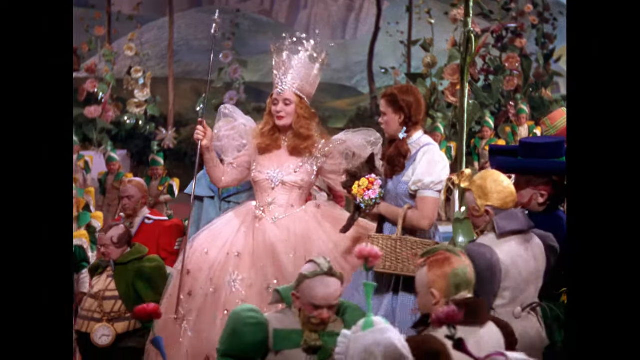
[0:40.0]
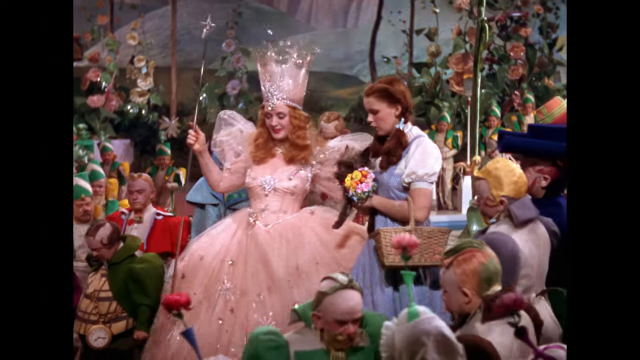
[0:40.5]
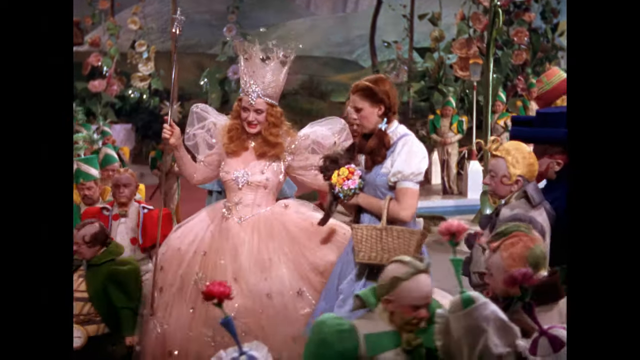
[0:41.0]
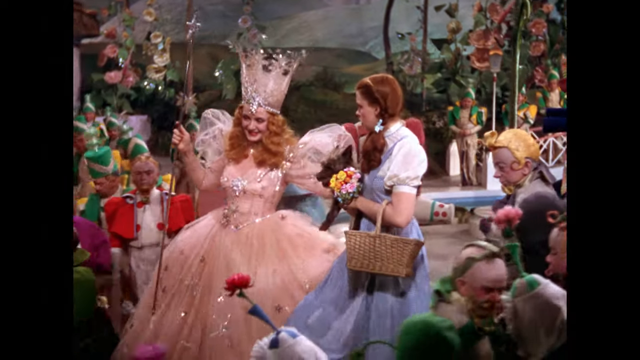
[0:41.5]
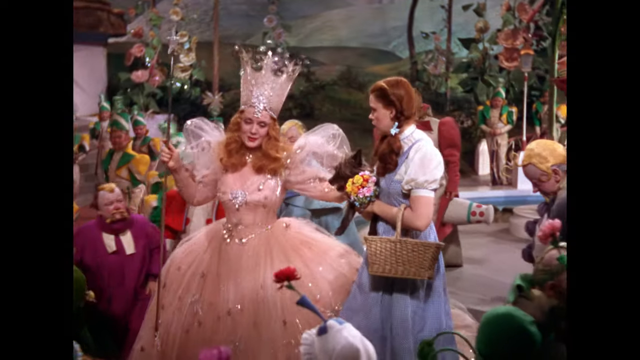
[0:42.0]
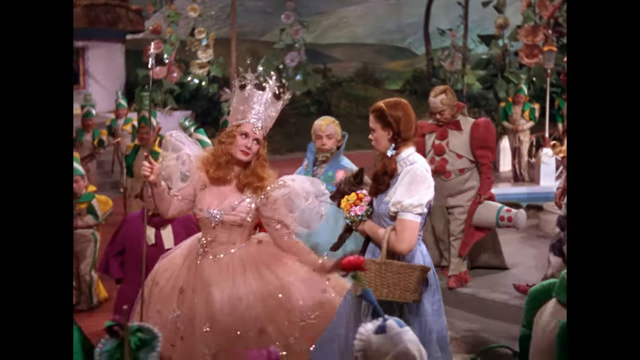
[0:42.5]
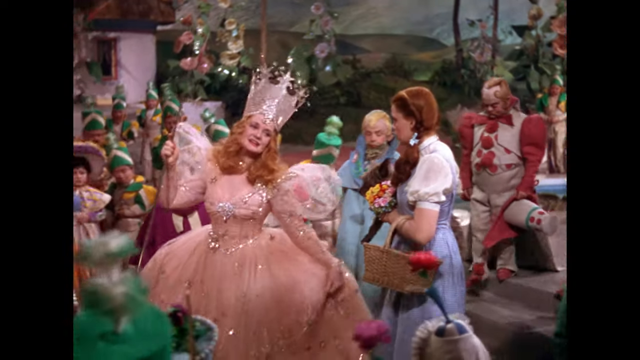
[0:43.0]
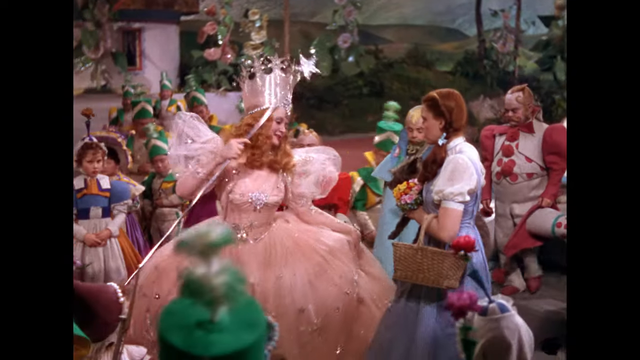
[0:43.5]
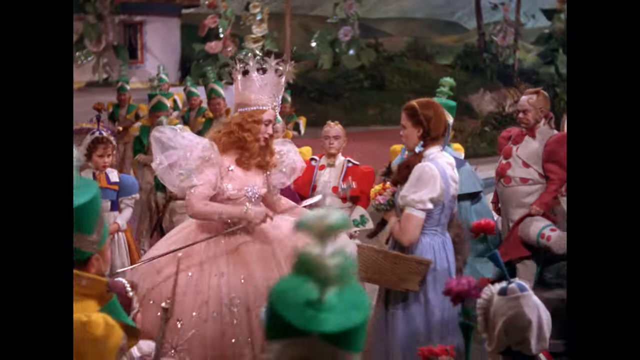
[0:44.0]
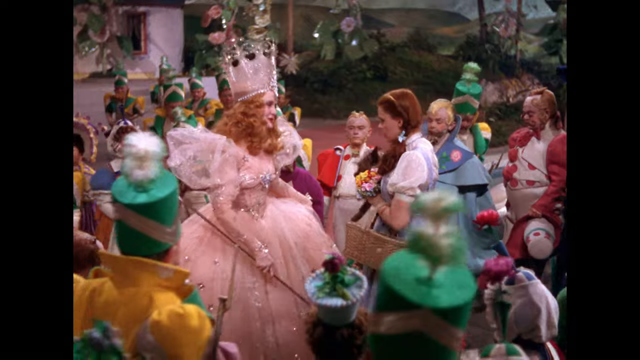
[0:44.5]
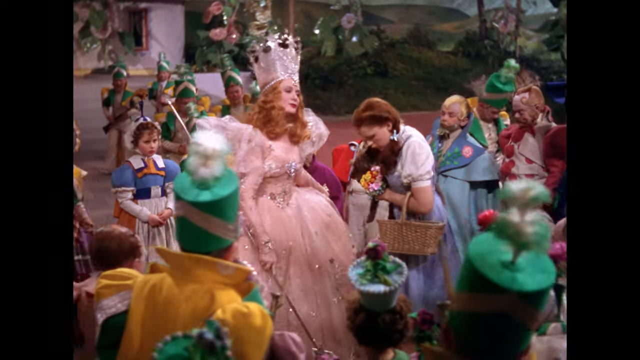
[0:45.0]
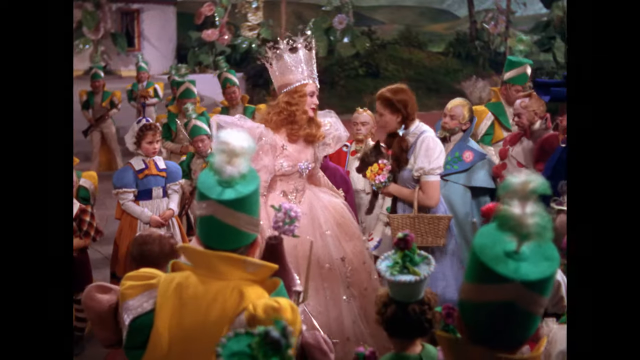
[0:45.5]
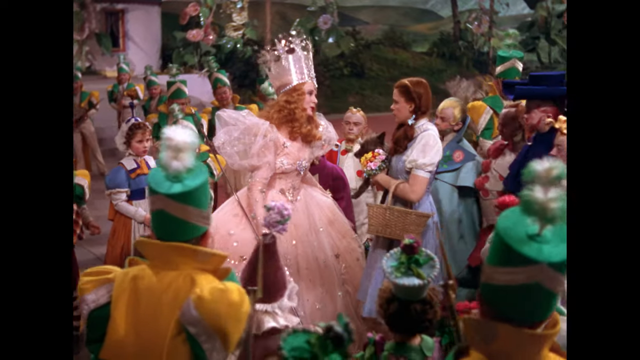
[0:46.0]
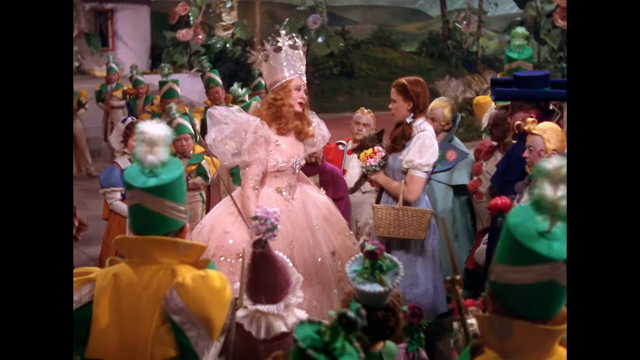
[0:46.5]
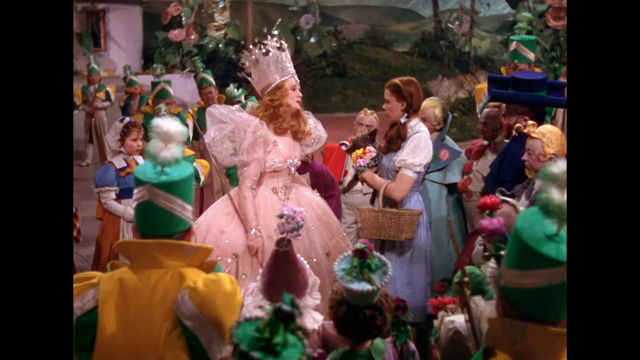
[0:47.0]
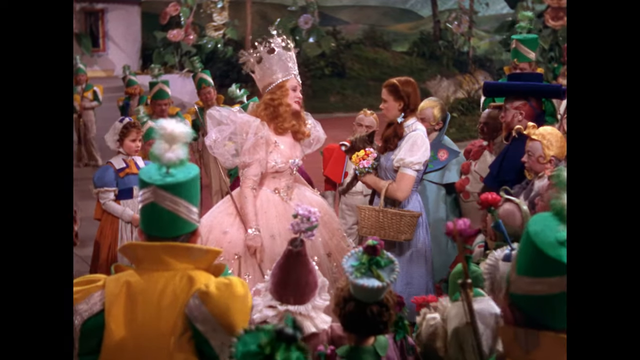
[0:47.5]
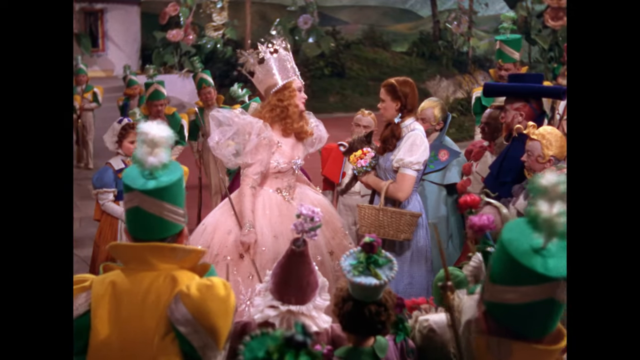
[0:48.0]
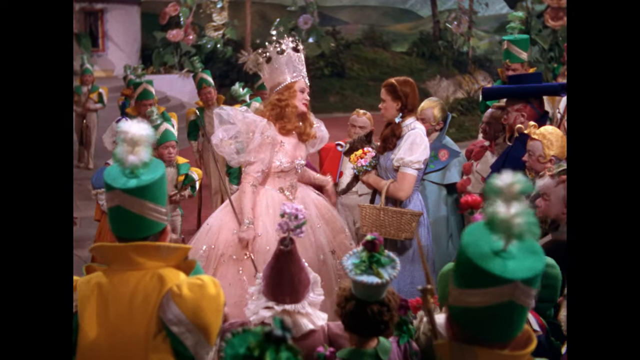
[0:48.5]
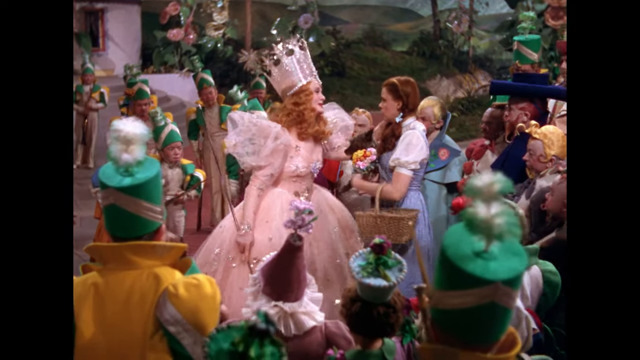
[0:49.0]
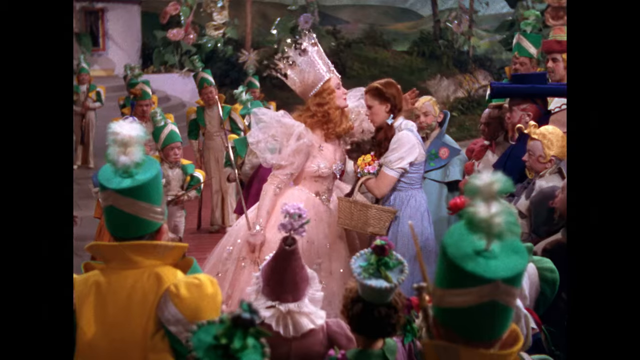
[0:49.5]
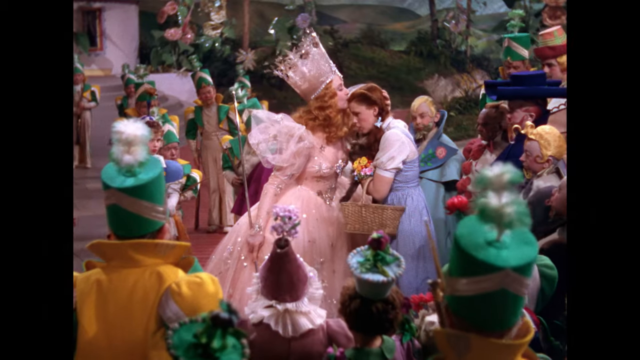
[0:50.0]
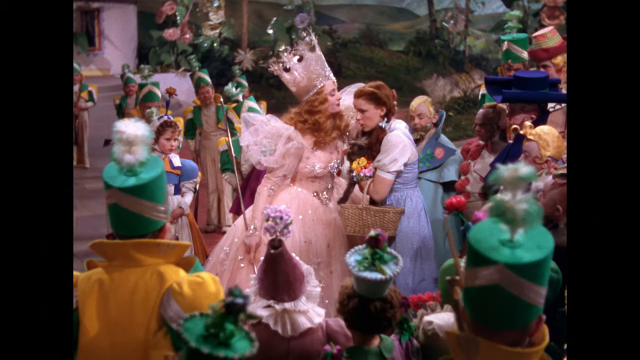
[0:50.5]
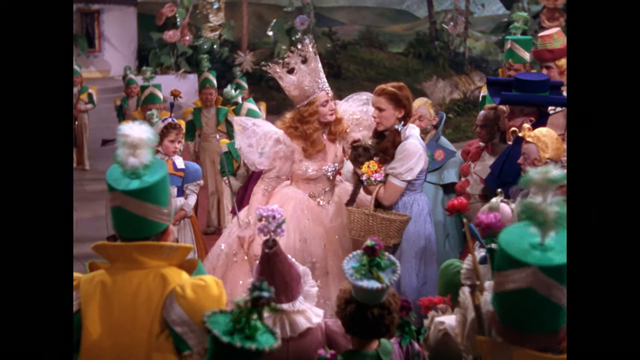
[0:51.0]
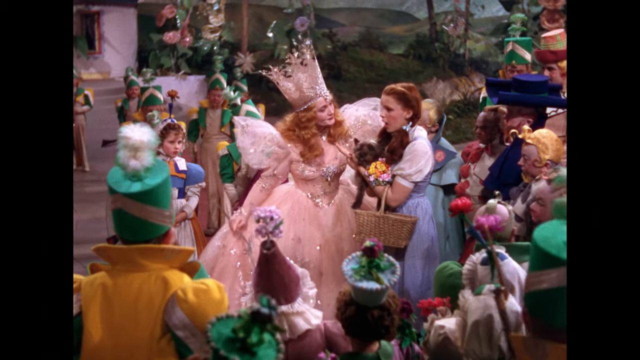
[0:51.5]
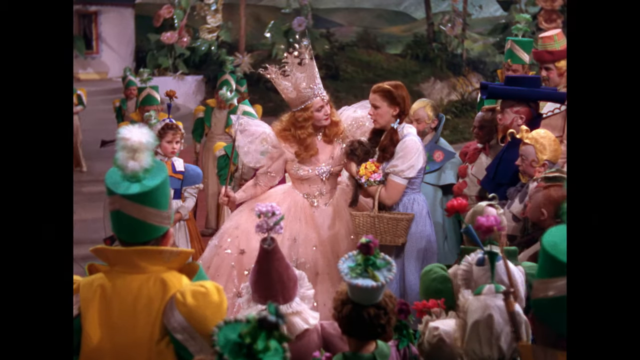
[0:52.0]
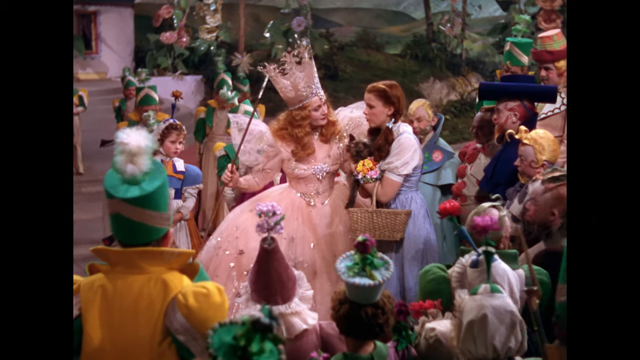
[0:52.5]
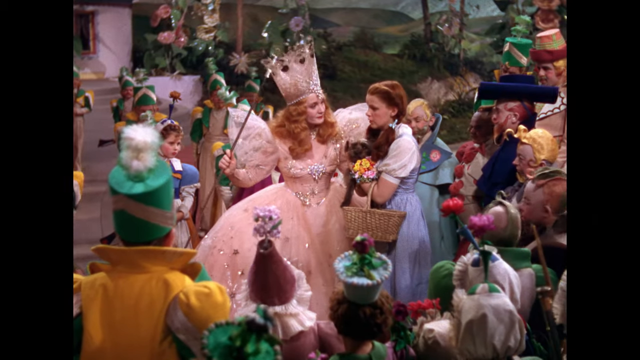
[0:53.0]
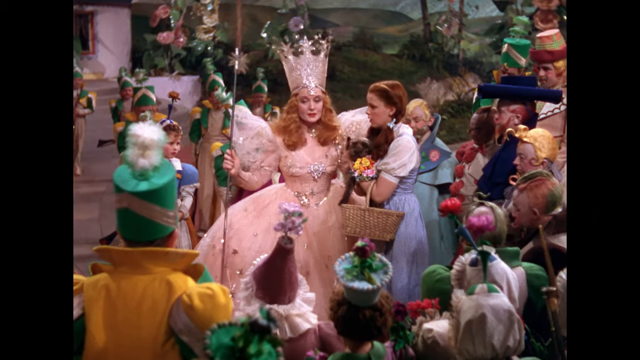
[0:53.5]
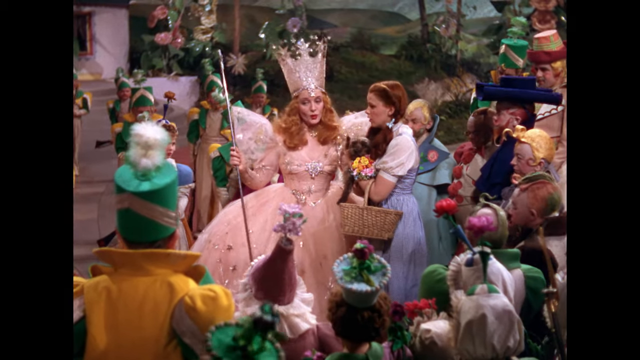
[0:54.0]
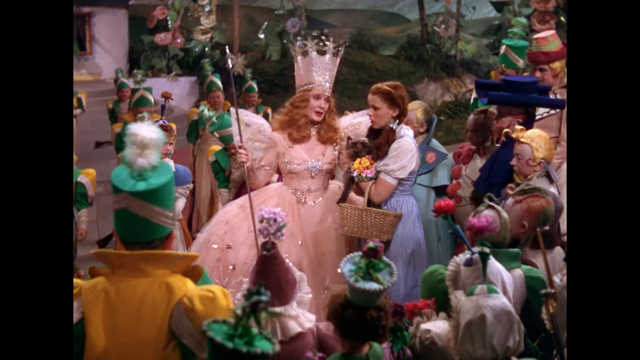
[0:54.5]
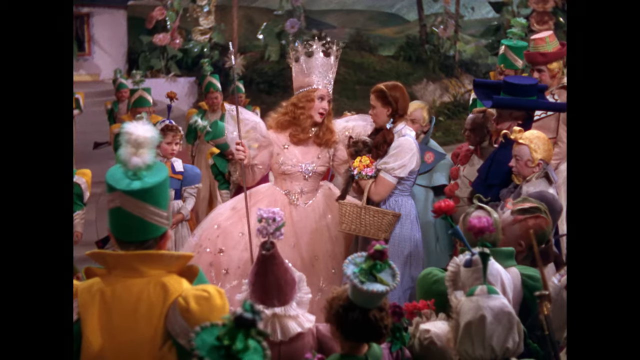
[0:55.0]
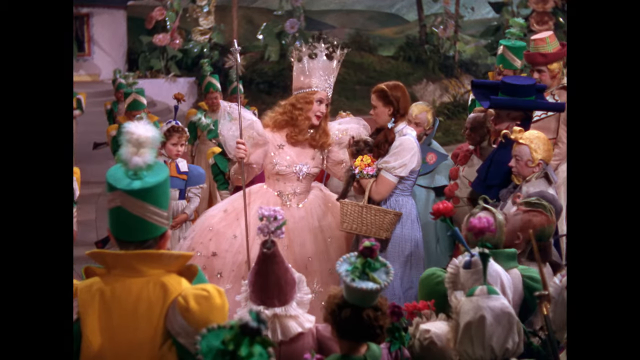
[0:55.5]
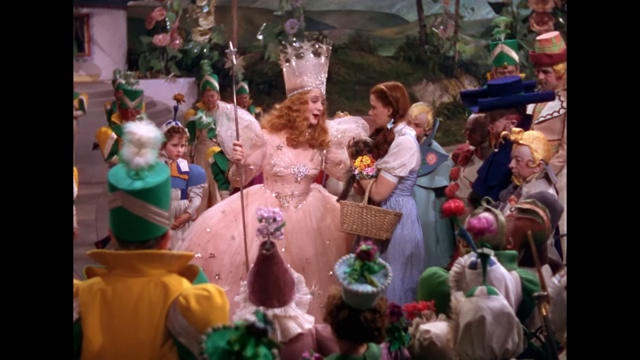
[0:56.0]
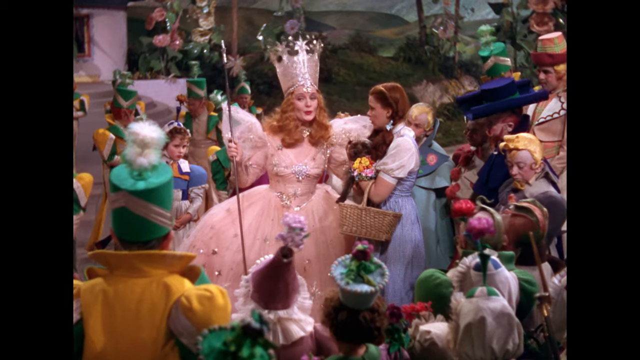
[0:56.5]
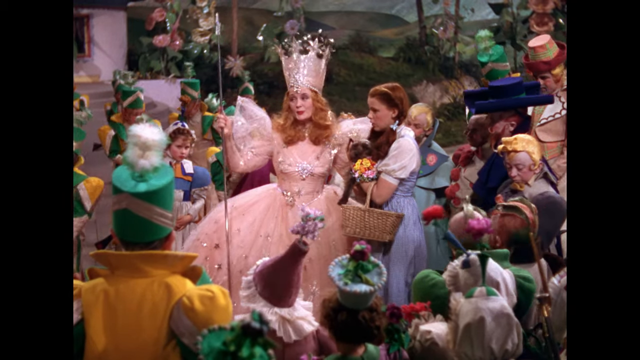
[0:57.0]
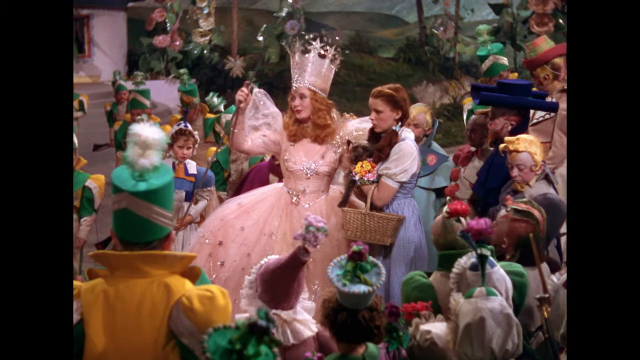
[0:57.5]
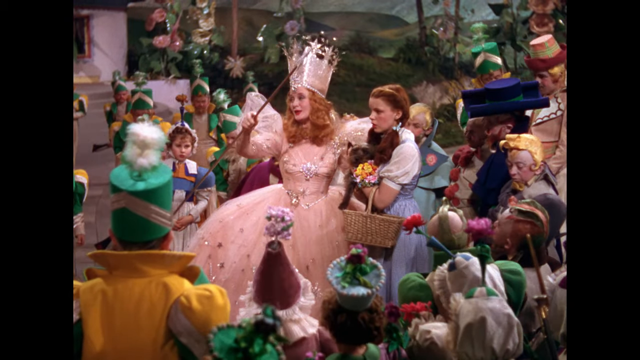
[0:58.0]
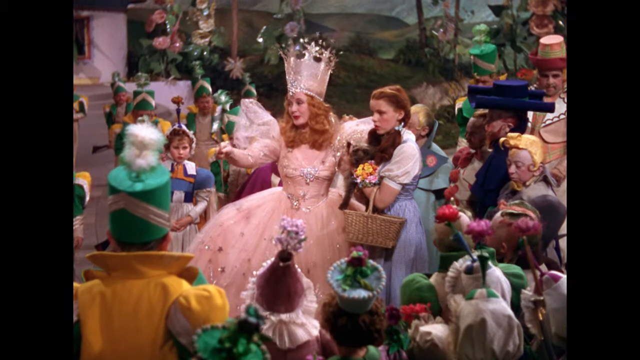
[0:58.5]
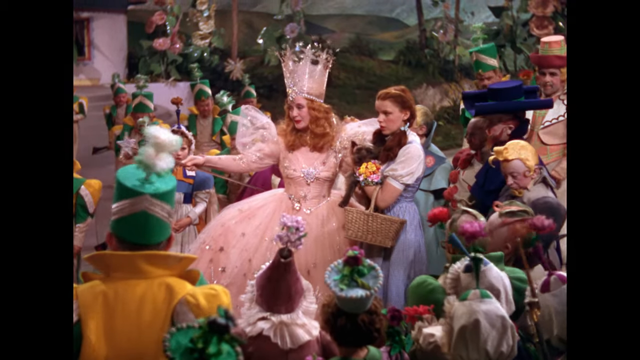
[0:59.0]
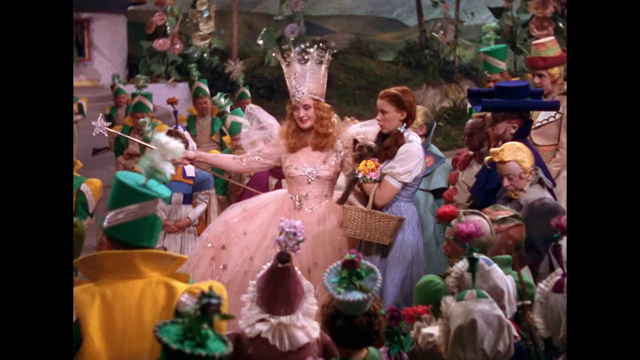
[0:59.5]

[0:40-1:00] The Fairy Godmother and Dorothy walk down the stairs while the Munchkin people clear out of their way and continue to crowd around them. They stop at the bottom of the stairs, and the fairy godmother turns to Dorothy to speak, shaking her head a little as if speaking passionately. She leans in, gently grabs Dorothy by the back of the head, and kisses her on the forehead. Dorothy speaks while holding her dog, a small bouquet of flowers and a brown picnic basket on her arm; she seems to ask the fairy godmother a question. The fairy godmother turns to her and continues speaking, then turns to the audience in front of her, holds up her wand, a long skinny stick with a bright silver star on top, and waves it in the air from left to right.